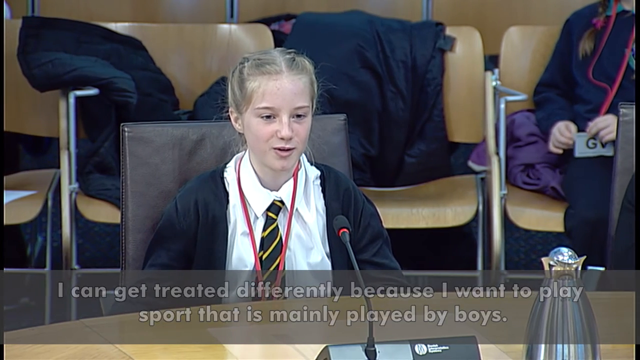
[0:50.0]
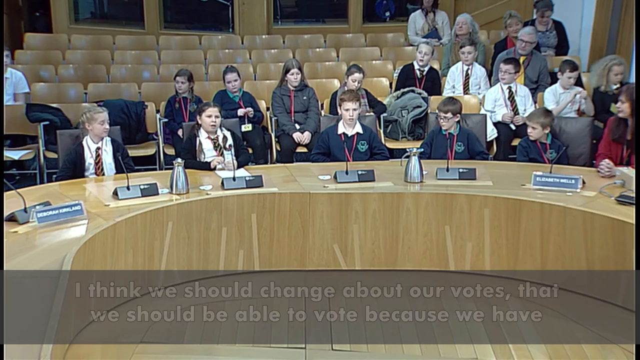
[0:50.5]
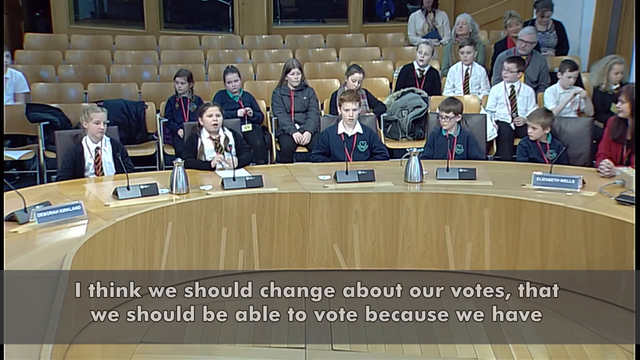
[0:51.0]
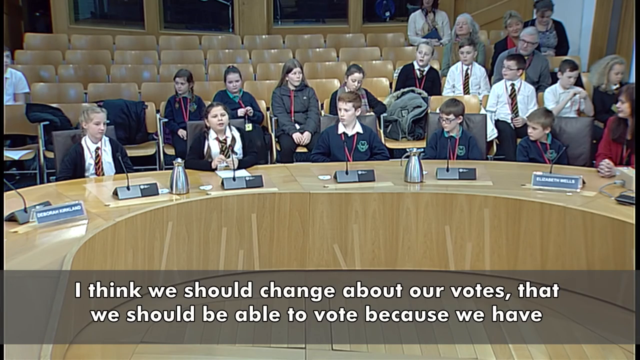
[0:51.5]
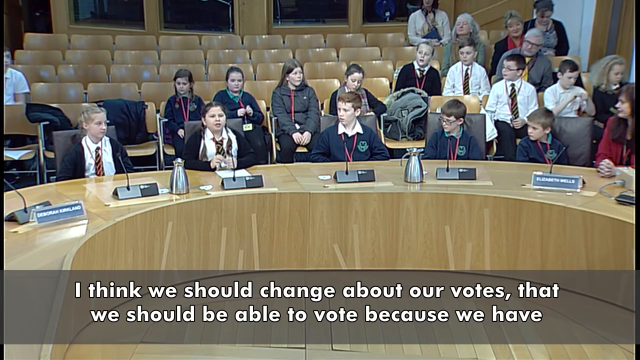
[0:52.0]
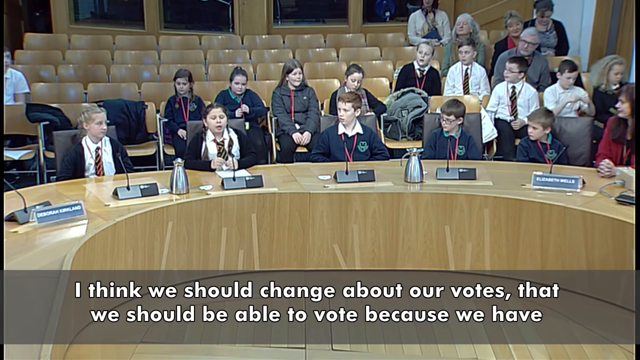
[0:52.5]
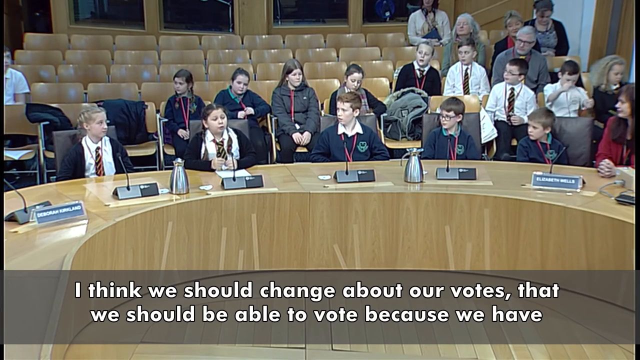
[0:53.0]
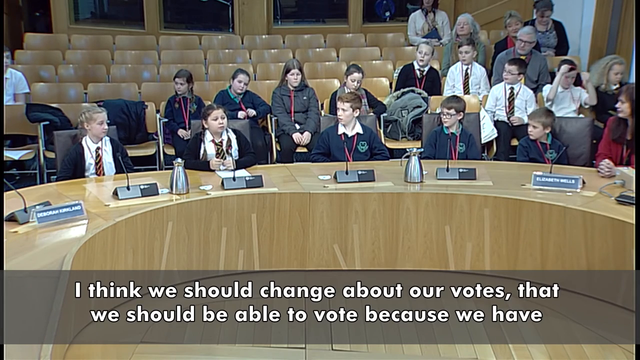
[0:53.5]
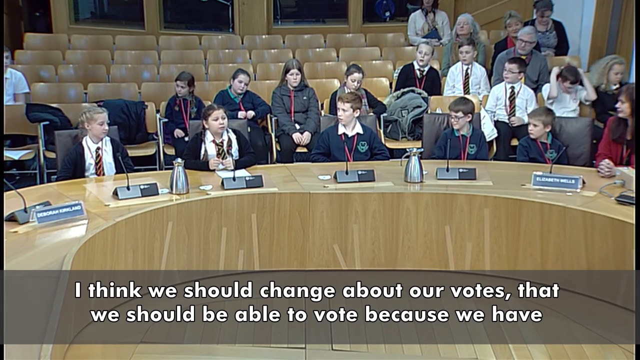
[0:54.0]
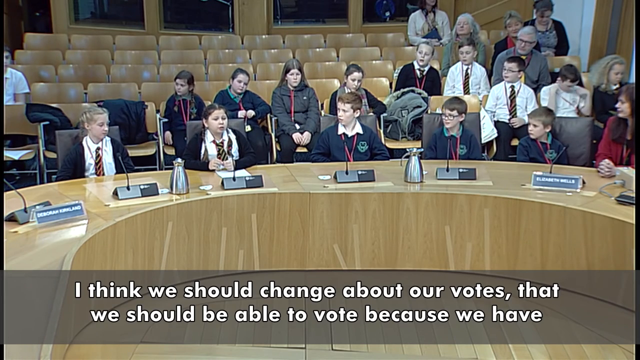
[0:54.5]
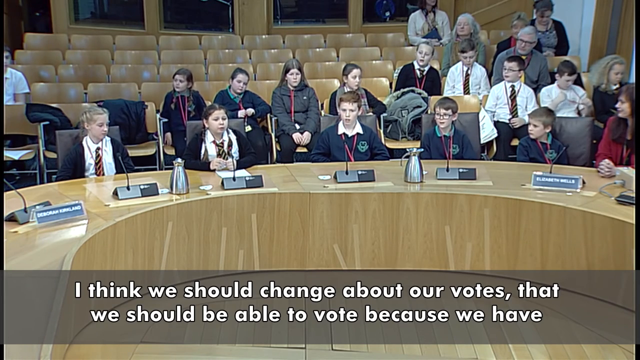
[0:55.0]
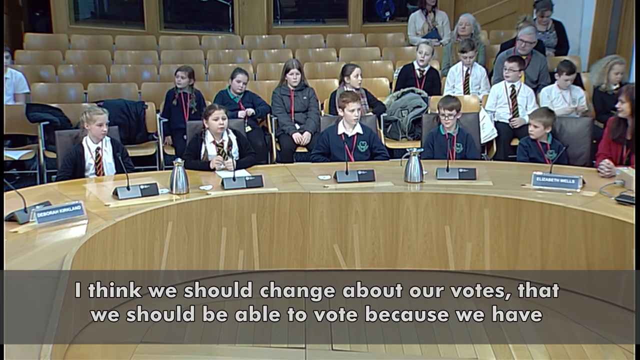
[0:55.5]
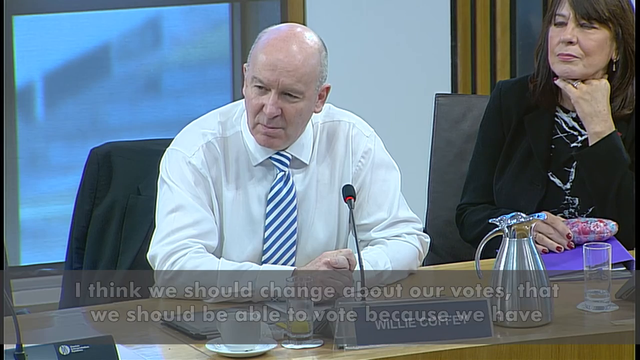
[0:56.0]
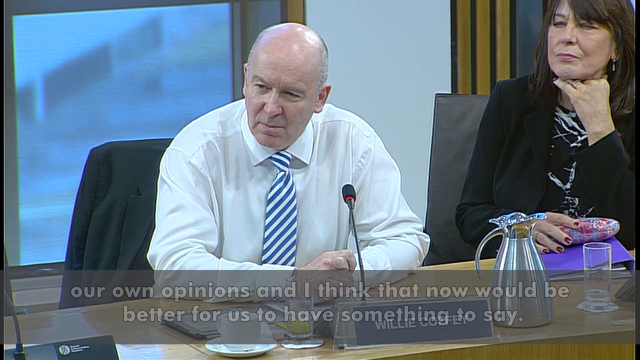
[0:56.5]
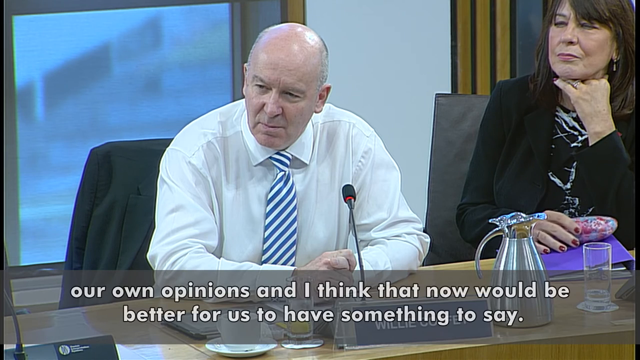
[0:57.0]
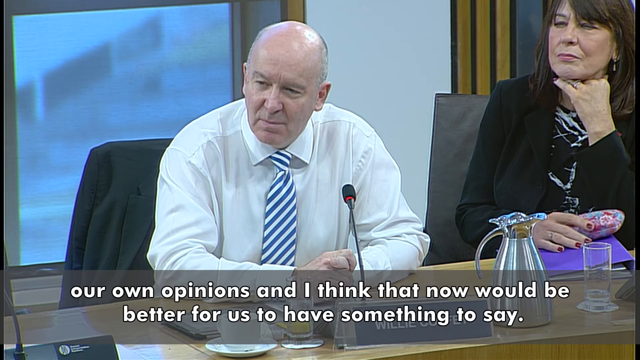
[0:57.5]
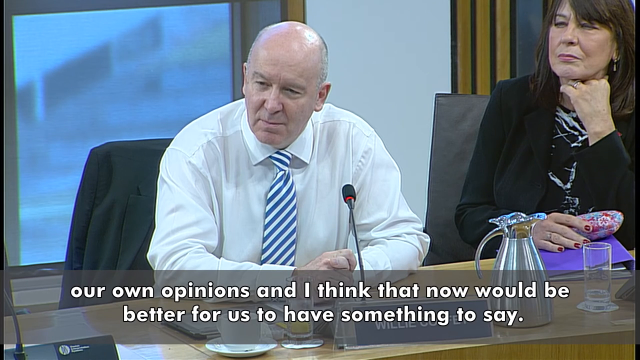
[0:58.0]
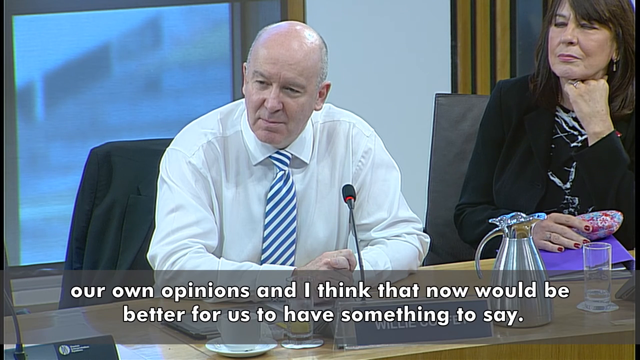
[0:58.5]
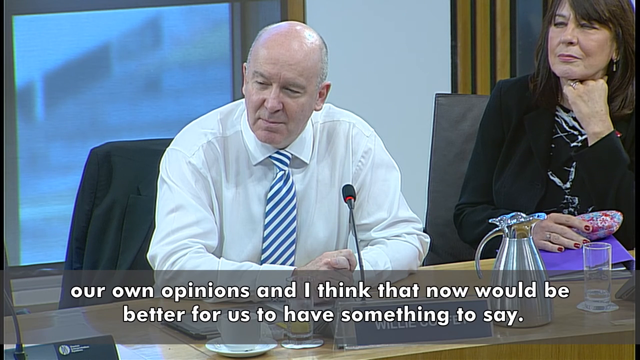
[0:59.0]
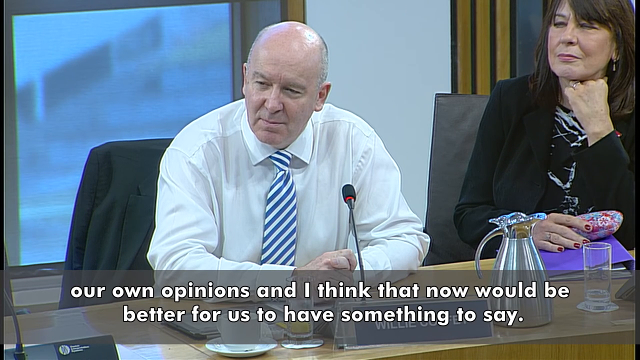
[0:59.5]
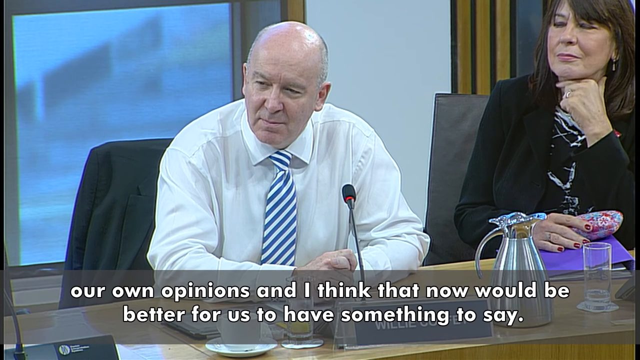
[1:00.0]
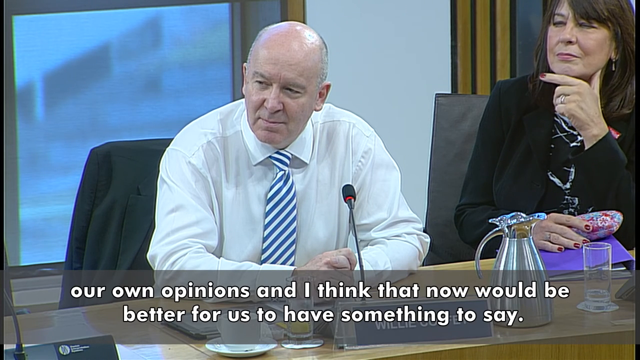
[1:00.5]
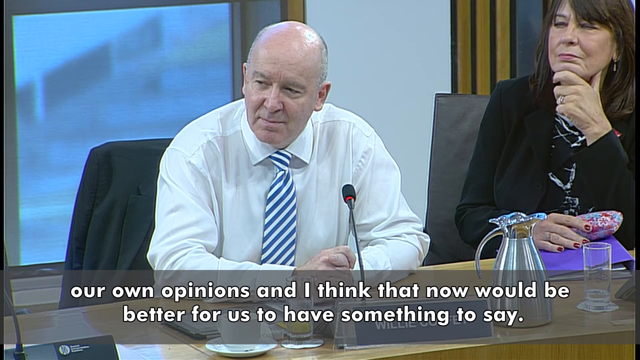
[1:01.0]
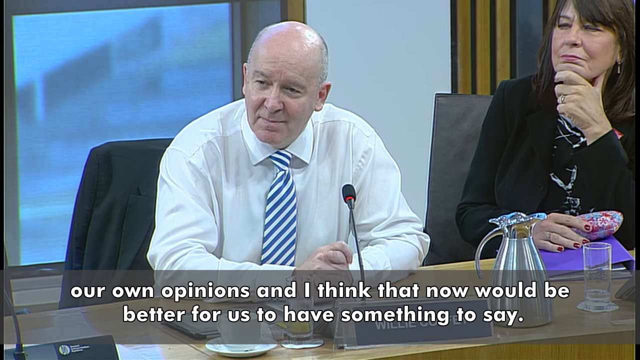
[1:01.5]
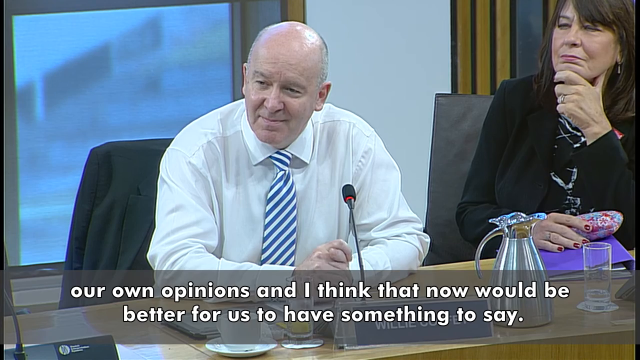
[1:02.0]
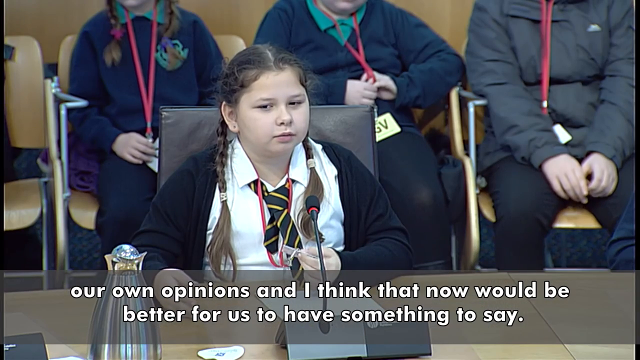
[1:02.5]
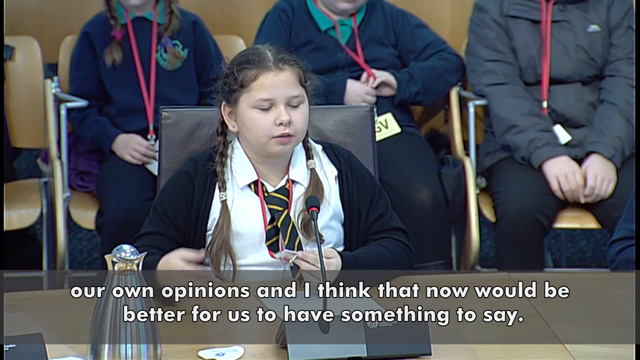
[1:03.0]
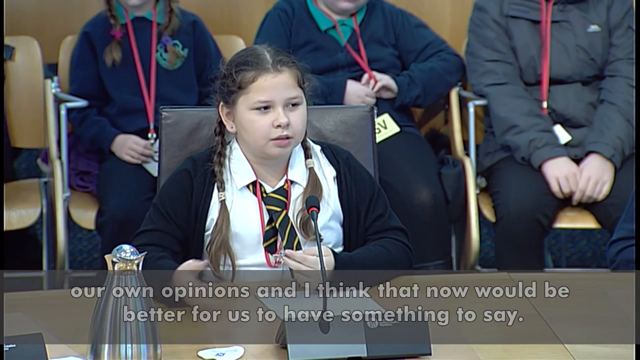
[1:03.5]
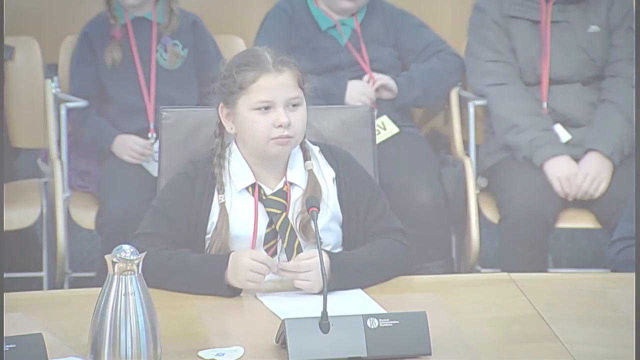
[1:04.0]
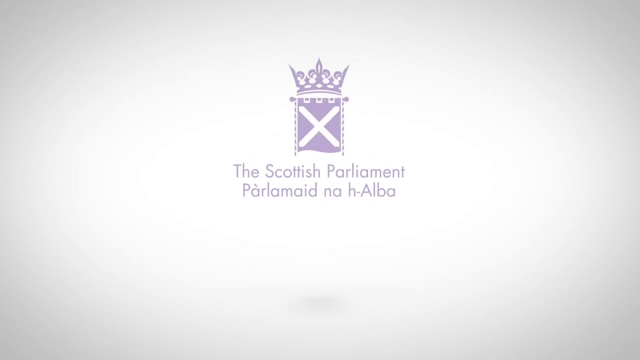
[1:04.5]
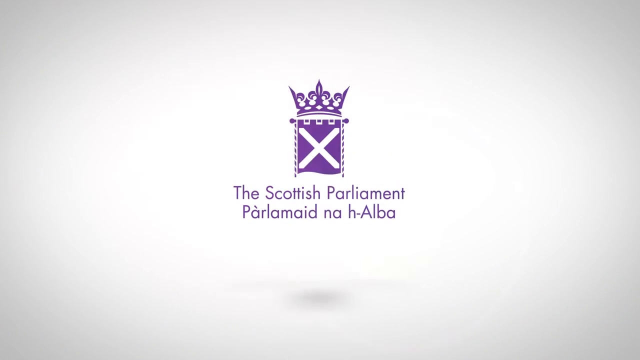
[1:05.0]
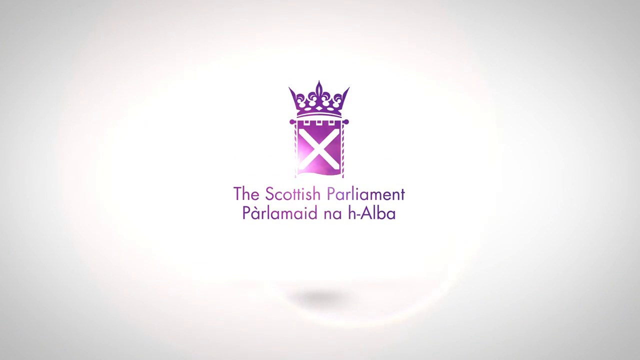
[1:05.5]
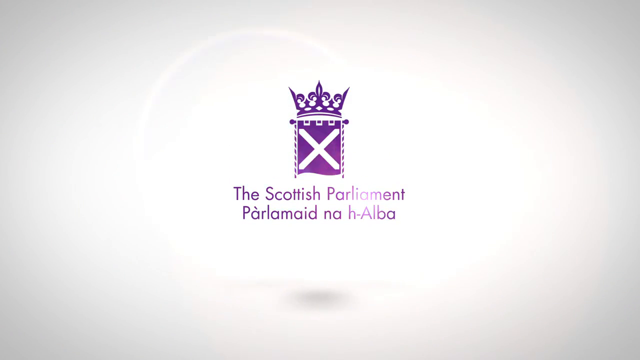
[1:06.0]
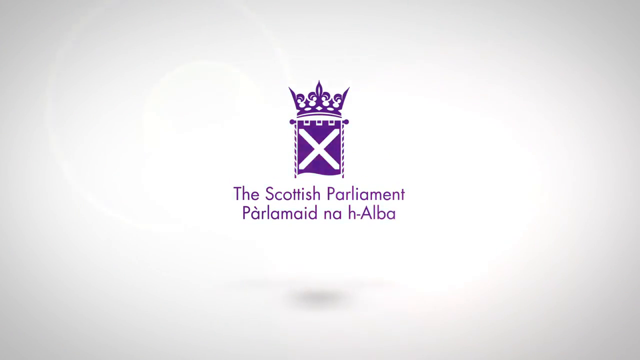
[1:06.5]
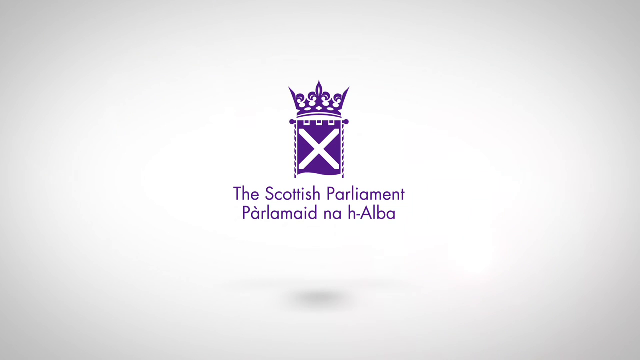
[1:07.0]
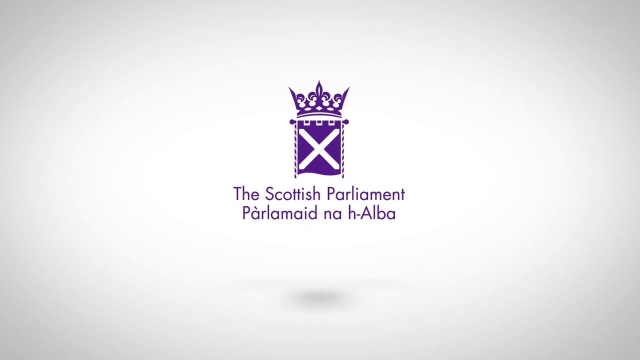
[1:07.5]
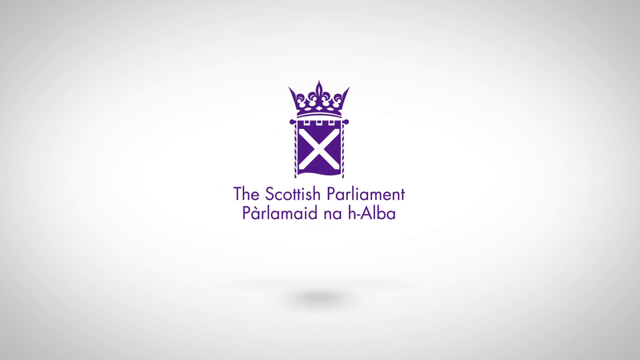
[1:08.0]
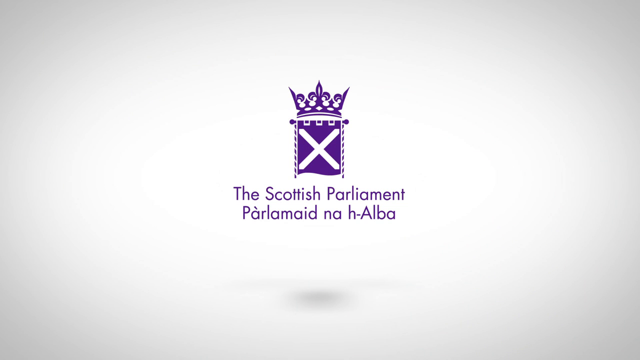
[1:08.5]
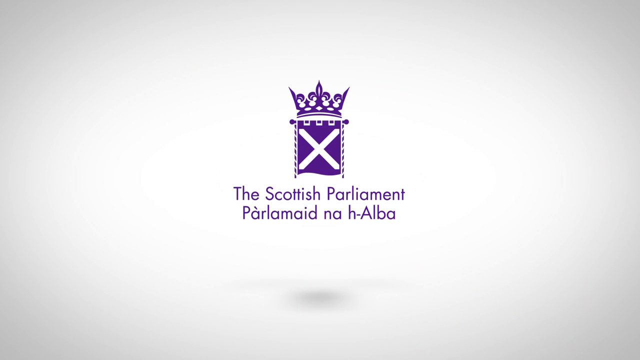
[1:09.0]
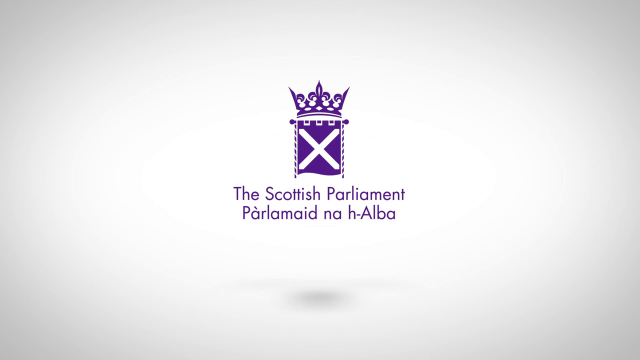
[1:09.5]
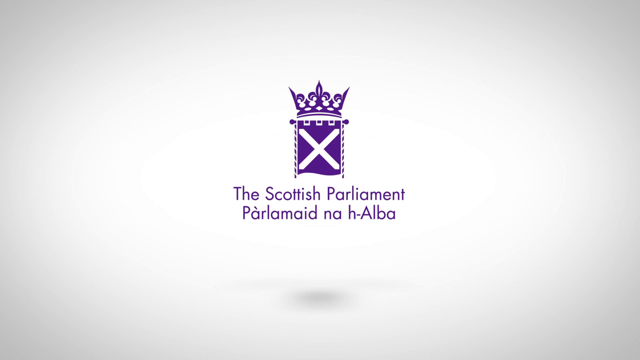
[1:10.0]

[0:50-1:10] About five children sit at the desk, with more in the background sitting in the ascending seats. One of the children, apparently the second from the left, is saying the text "I think we should change about our votes, that we should be able to vote because we have"; more text then appears reading "our own opinions, and I think that now would be better for us to have something to say". The view shifts to an older man sitting at the desk in a white dress shirt and a blue and white striped tie. A woman is sitting off to the right side with another pitcher sitting in front of her; she has one hand on a hardcover notebook in front of her and her other hand is supporting her chin. The video cuts back to a close-up of the girl speaking, then the screen suddenly fades to white and shows a symbol for the Scottish Parliament. The symbol shines for a moment, appearing to reflect sunlight, and the video ends.